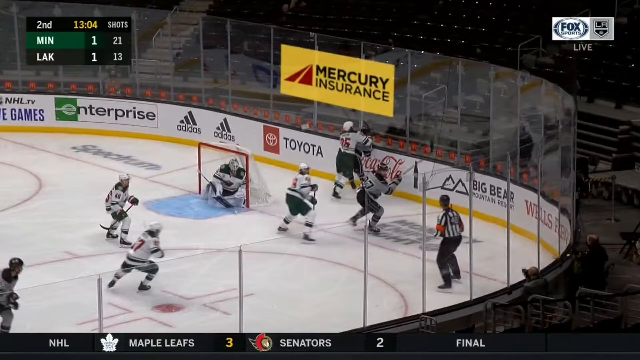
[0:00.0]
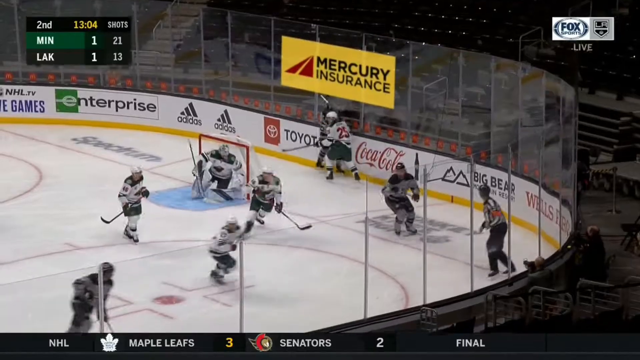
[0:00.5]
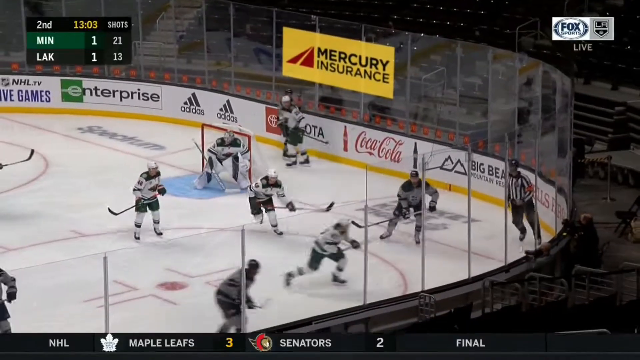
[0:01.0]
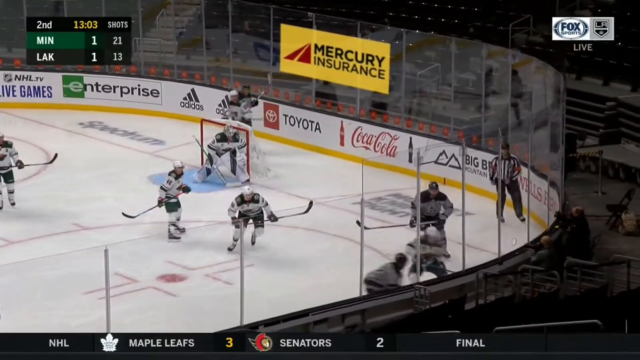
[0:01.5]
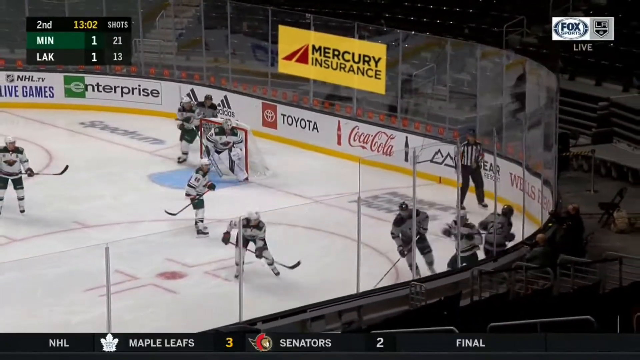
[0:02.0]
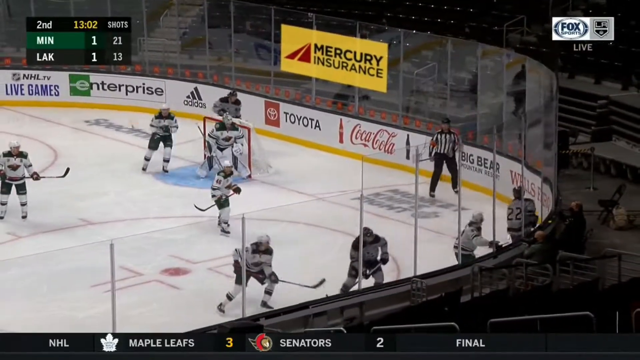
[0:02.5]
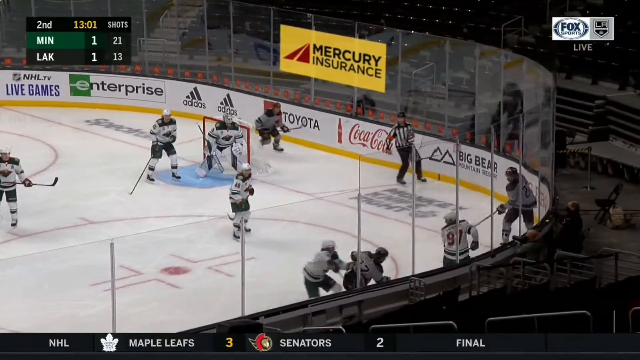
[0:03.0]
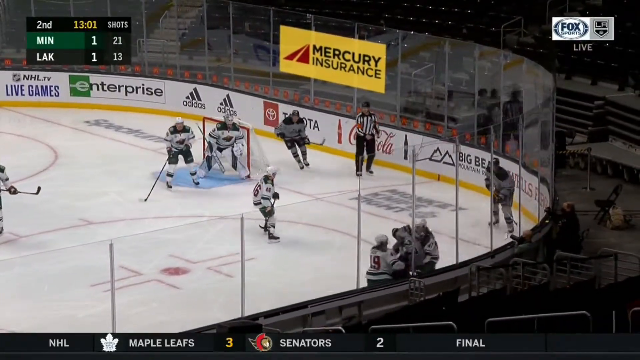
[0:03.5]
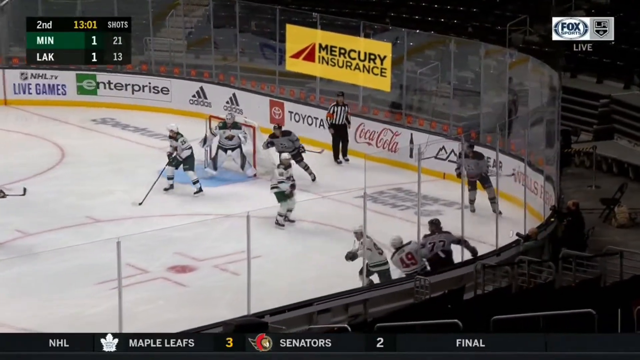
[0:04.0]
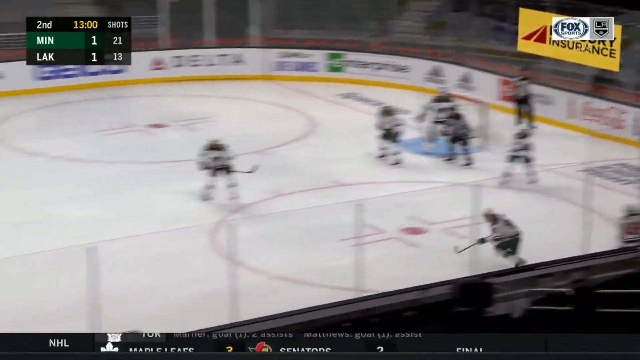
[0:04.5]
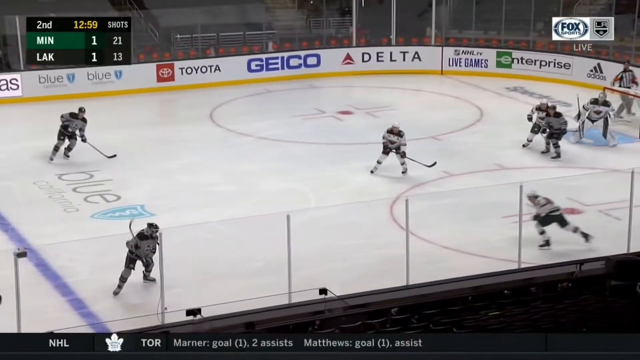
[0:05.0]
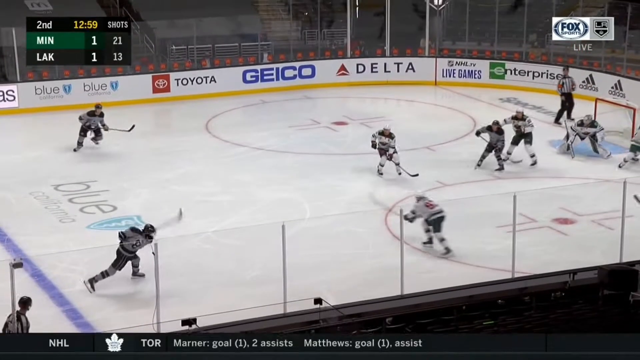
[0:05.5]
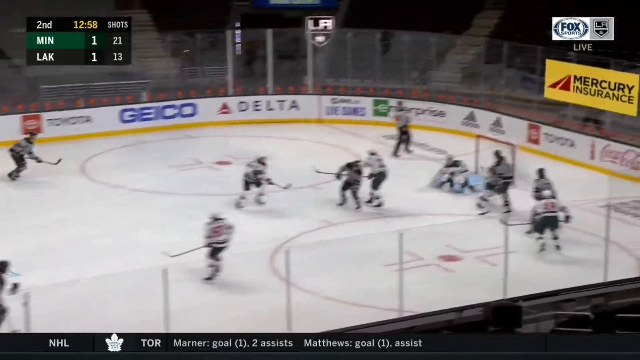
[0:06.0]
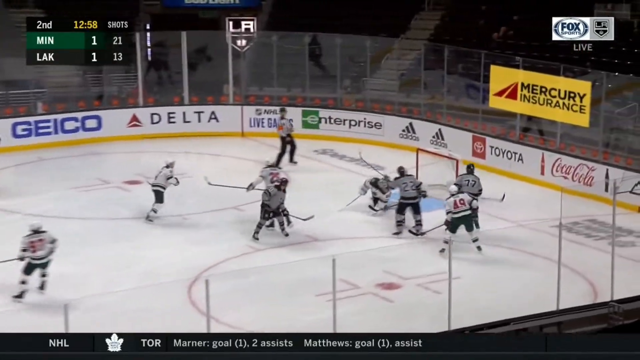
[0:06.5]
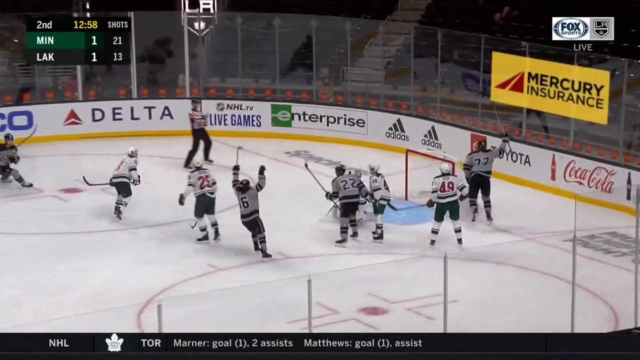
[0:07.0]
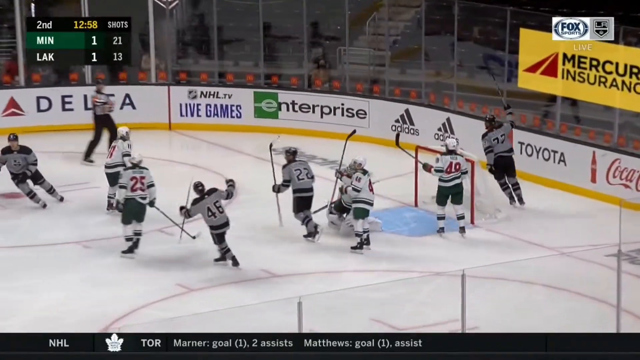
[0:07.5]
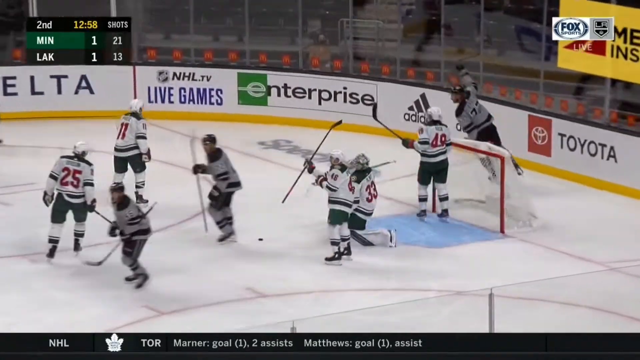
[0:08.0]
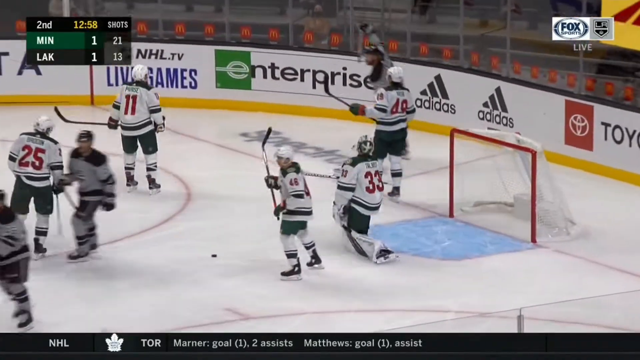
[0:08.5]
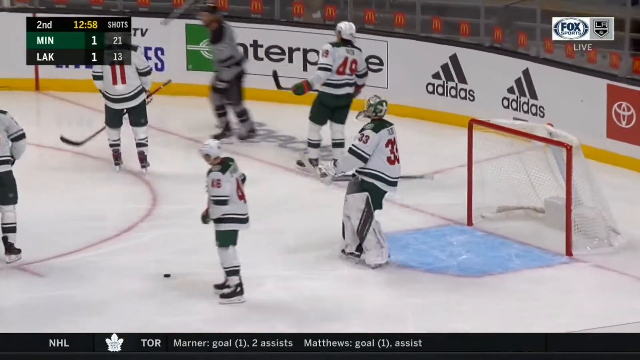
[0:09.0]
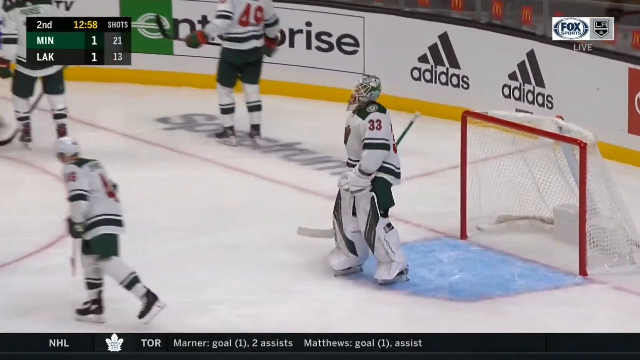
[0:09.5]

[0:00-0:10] An ice hockey game is underway between two teams. One team wears white tops with red numbers on the back, white hard hats, and black shorts with white underclothing. The other team wears black hats, grey tops with black shoulders, and black pants with black underclothing. The referee is at the bottom of the image, skating backwards as the grey team progresses towards the white team. The goalkeeper is in his goal, and a grey player takes a shot from distance, drawing back, shooting and scoring. A tall clear screen surrounds the rink to protect the audience from the puck, and nobody in the audience can be seen. About 11 players are visible at any one time. The action stays at the white team's end and does not go into the other end. A yellow Mercury Insurance promotional sign is behind the goal.